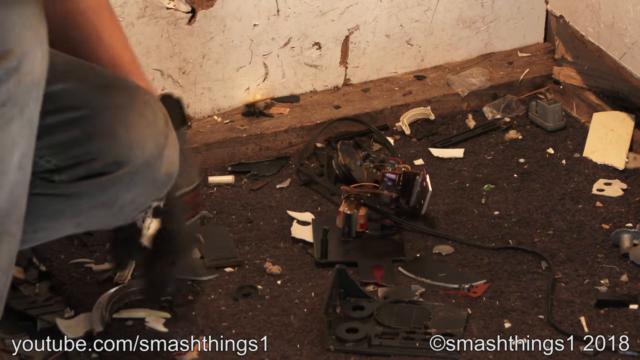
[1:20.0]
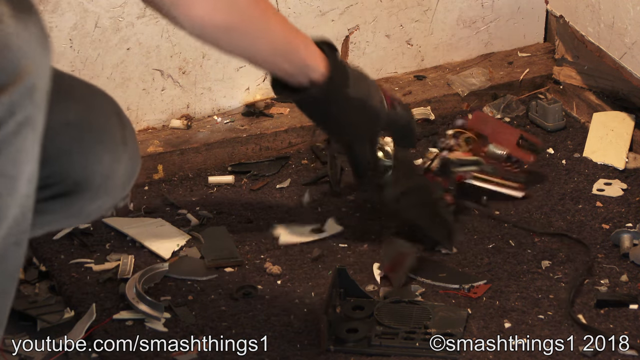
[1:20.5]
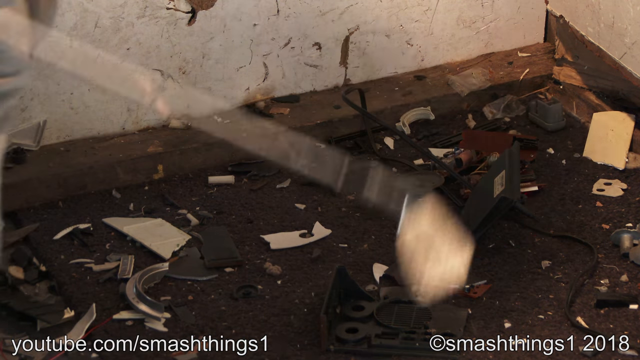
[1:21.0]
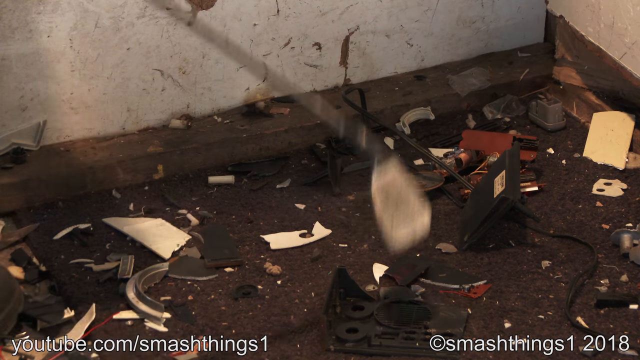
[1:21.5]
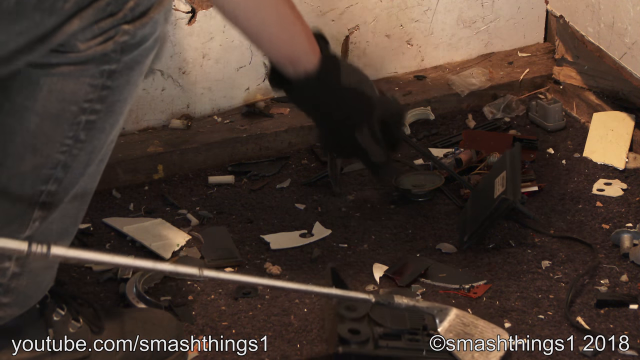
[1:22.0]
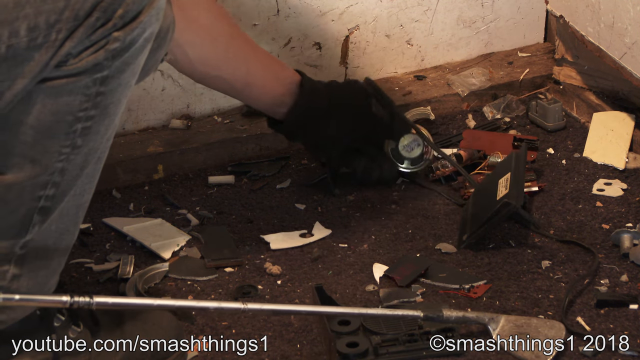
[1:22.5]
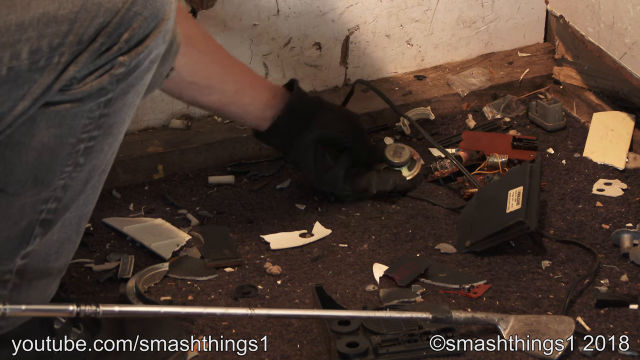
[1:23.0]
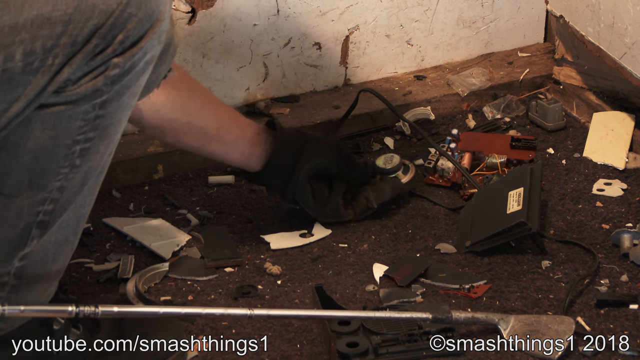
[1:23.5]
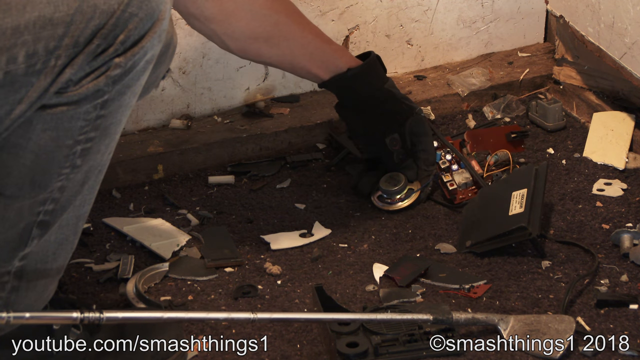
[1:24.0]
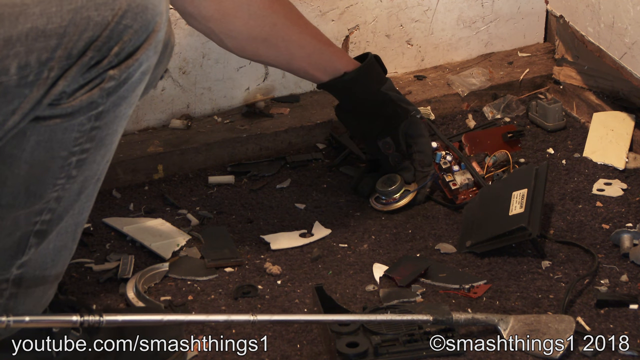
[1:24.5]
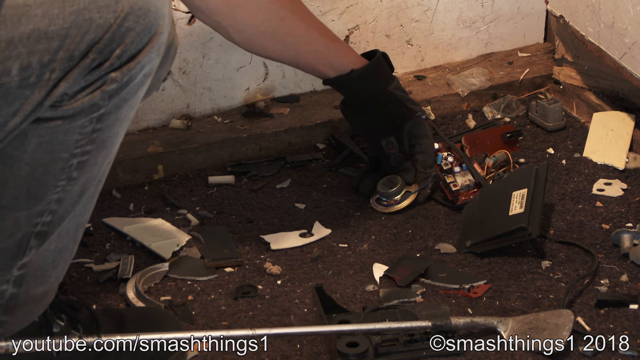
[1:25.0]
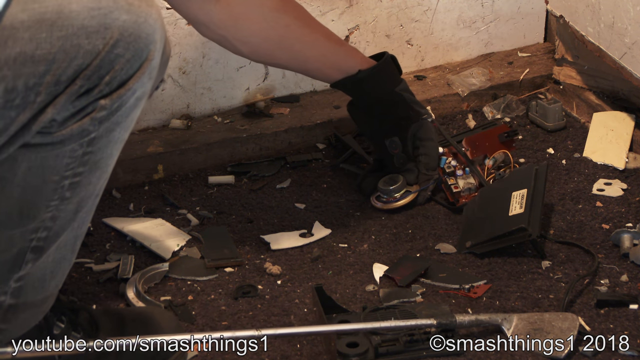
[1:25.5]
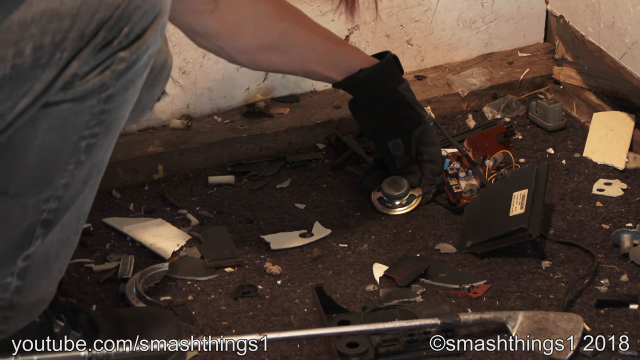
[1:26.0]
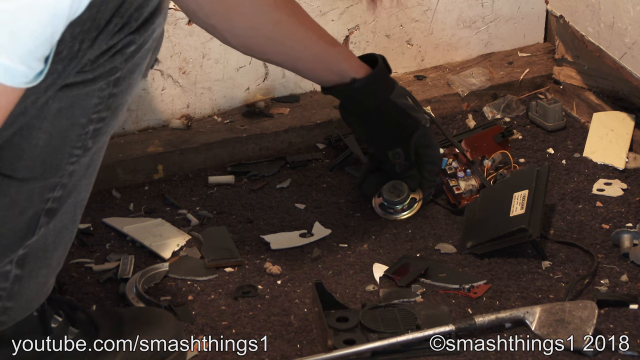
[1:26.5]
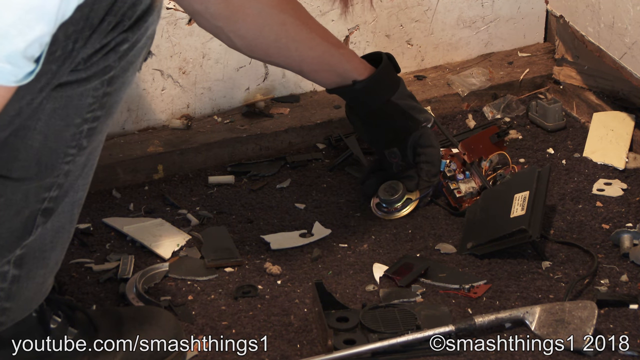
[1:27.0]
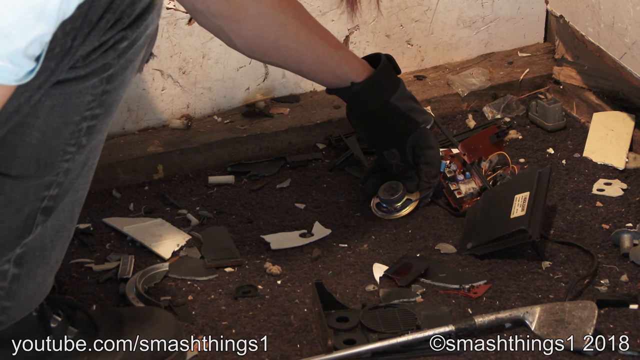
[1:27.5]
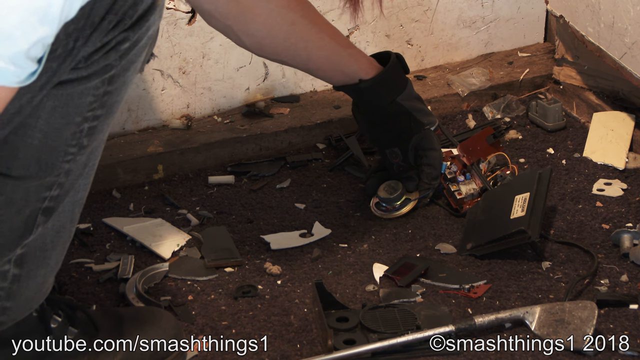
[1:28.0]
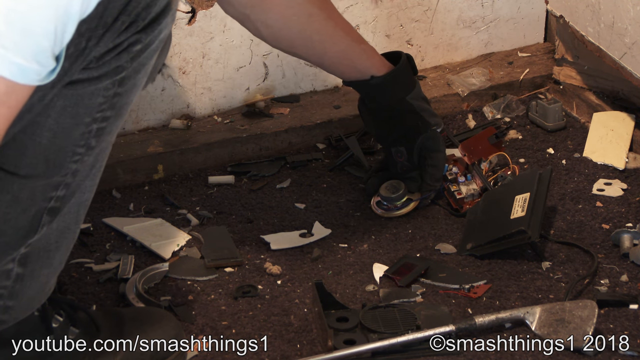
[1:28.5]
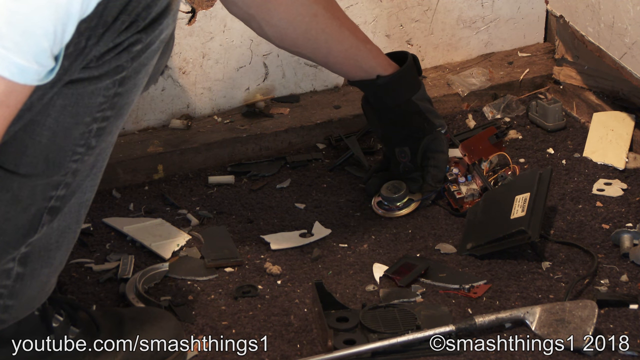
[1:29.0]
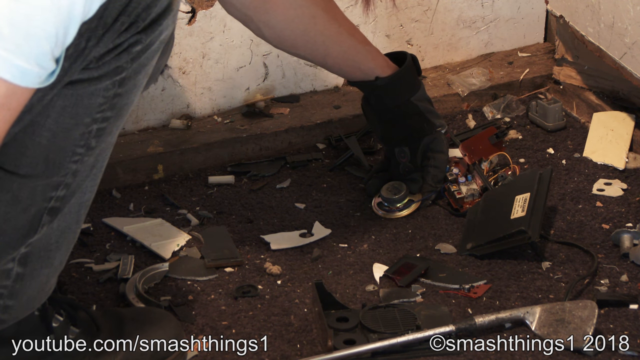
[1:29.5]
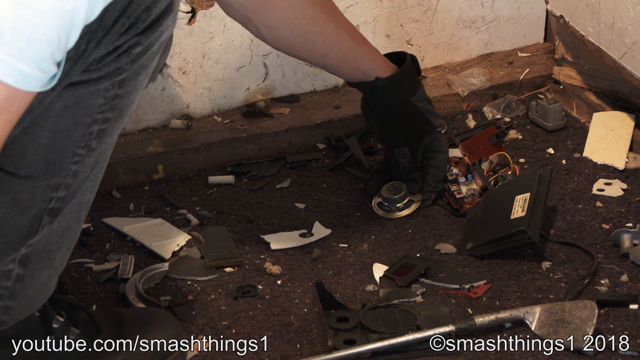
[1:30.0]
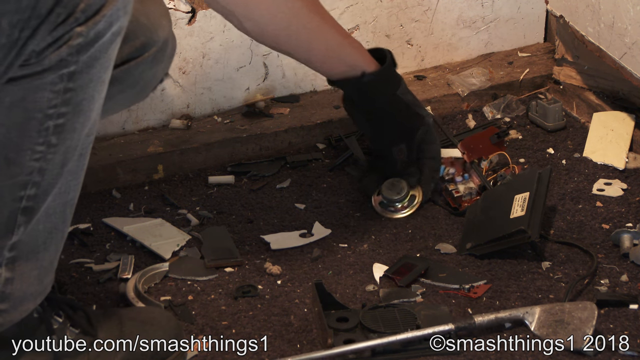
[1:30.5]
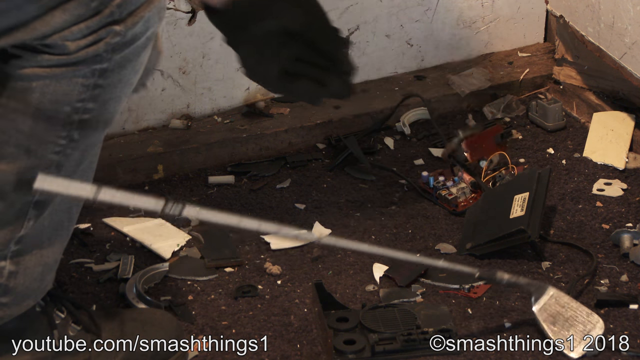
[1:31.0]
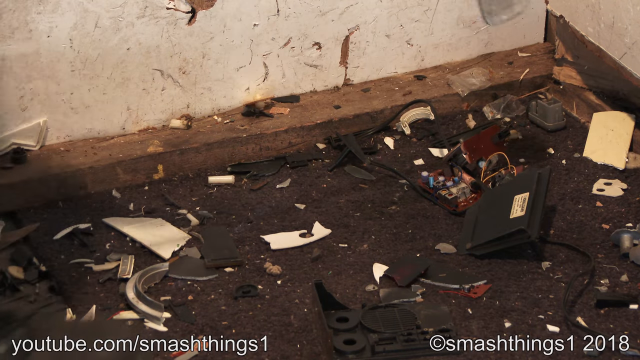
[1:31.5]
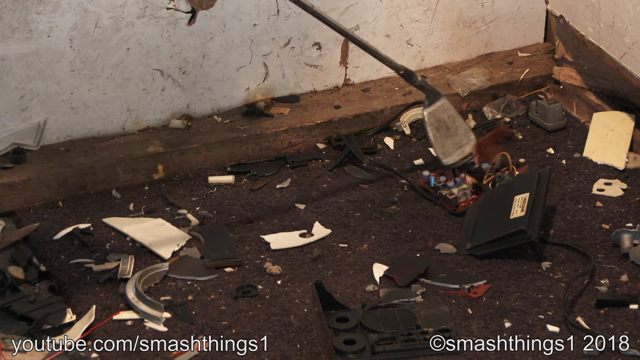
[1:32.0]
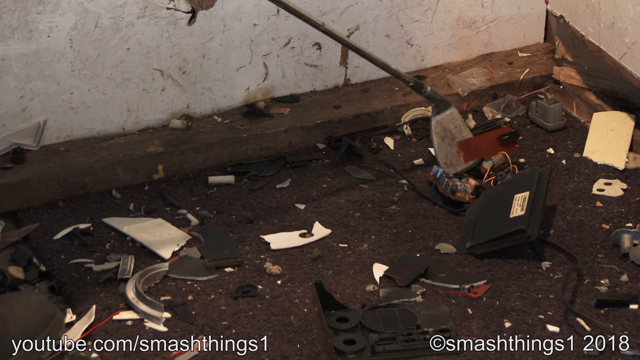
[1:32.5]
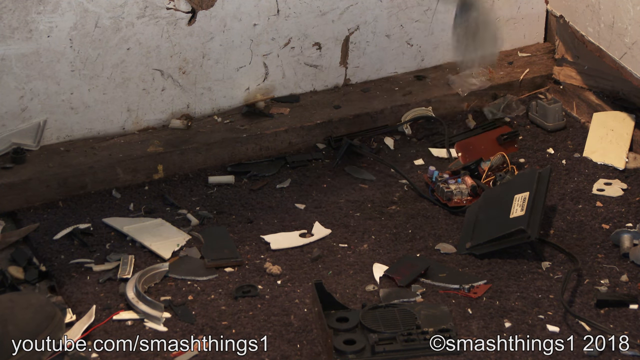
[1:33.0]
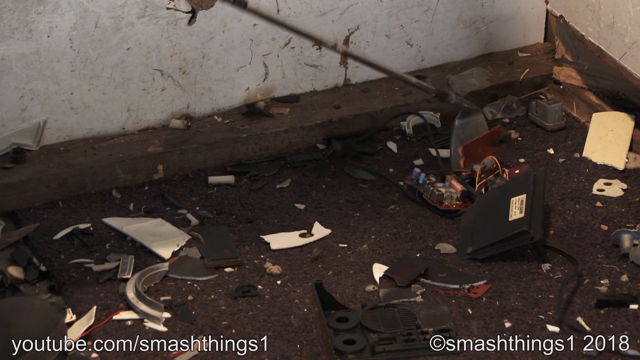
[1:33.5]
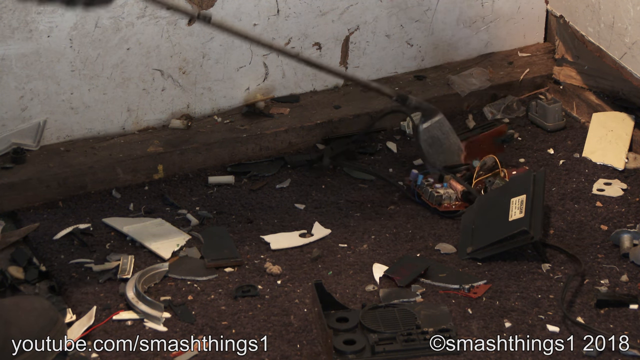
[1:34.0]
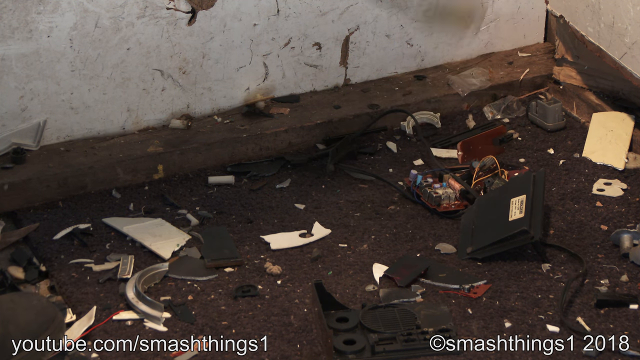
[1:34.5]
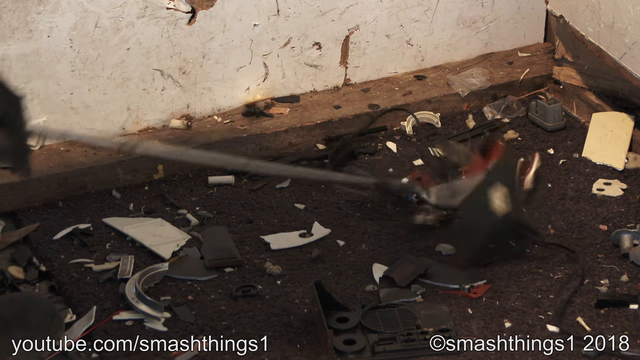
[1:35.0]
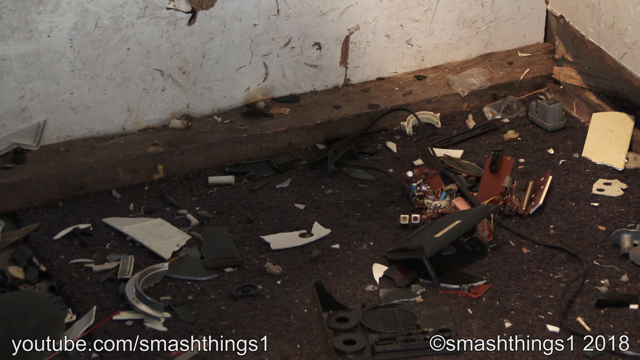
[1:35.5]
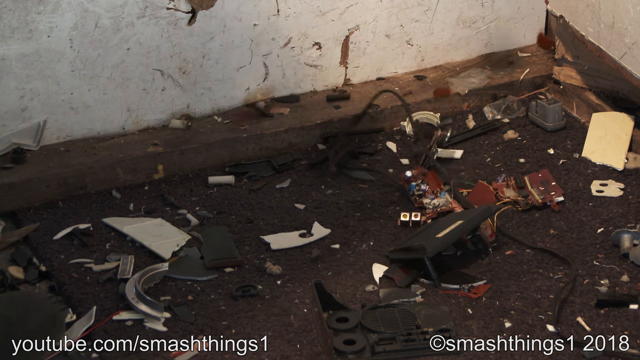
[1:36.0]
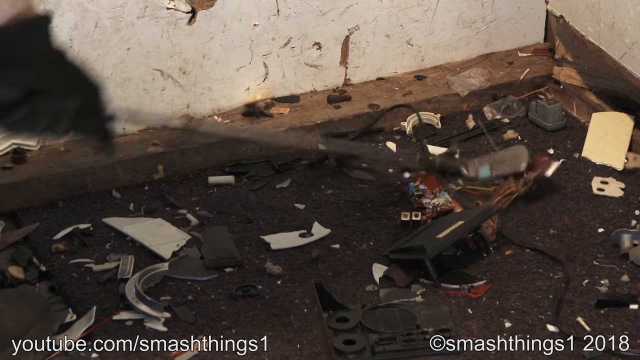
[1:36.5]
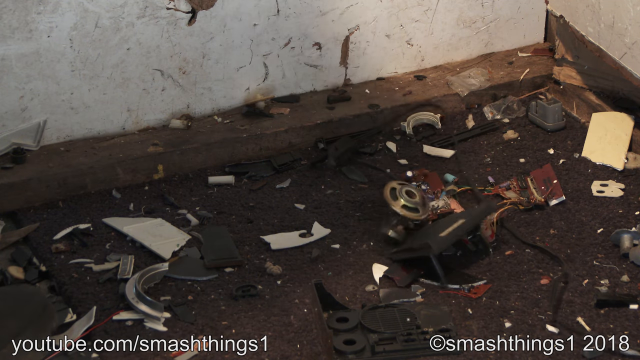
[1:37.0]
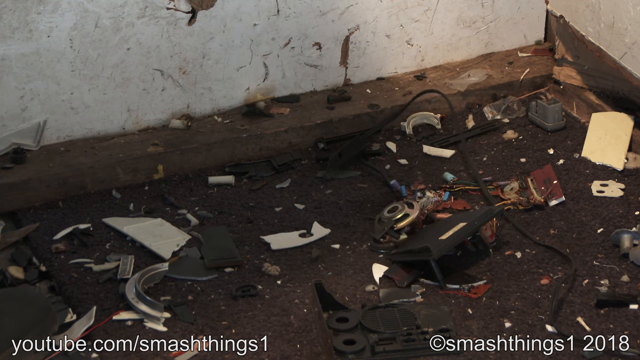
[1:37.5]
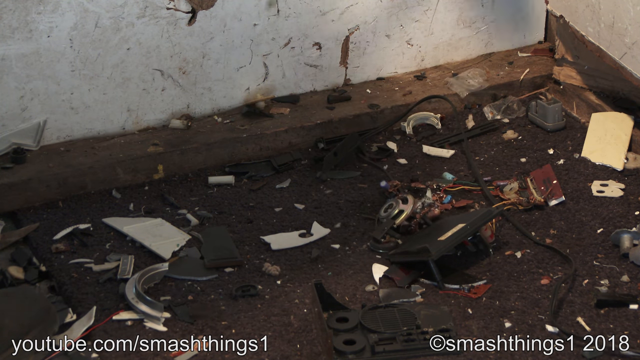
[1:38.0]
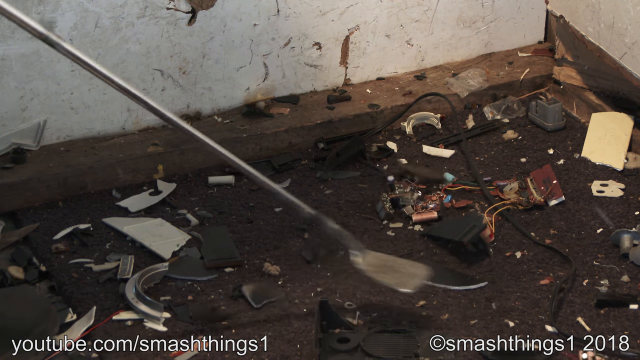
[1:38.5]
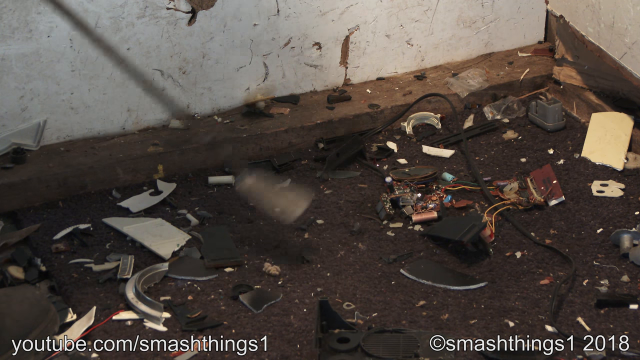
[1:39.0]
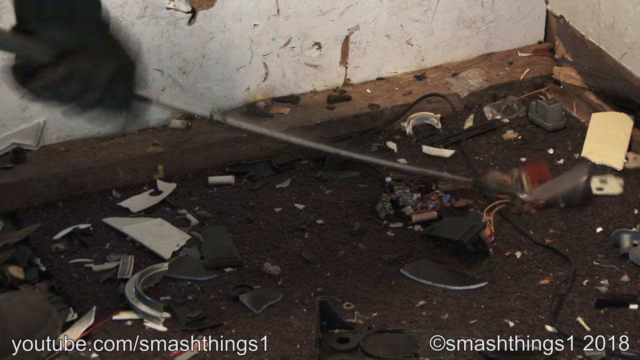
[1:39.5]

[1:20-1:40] A close-up shows a corner inside a smashing room. The man's body is on the left side of the screen; the muscularity of his biceps shows he is a man. He wears denim jeans and is bent down kneeling, with gloves on his hands. He lifts up a golf club with his right hand and then quickly puts it back down. White text at the bottom of the screen reads "youtube.com smash things 1 copyright smash things 1 2018." He then takes the golf club and bangs the items on the ground further, causing more destruction.